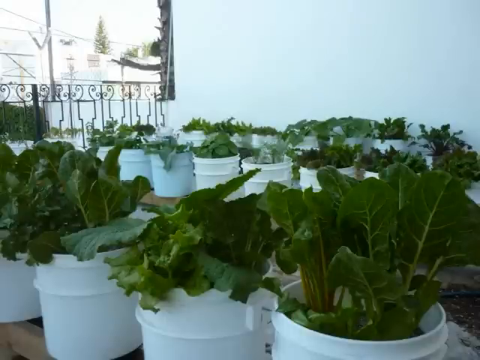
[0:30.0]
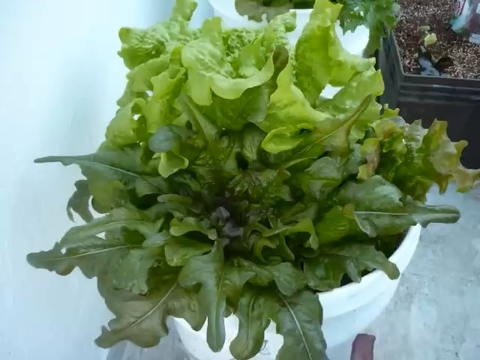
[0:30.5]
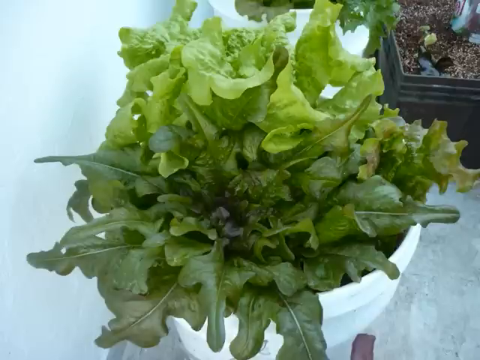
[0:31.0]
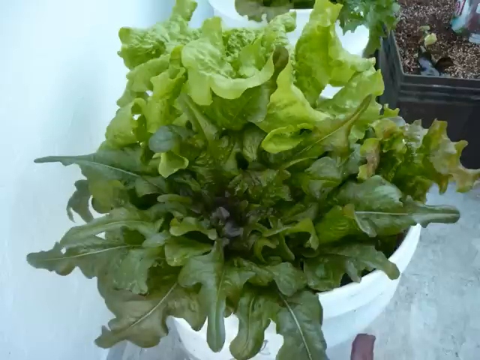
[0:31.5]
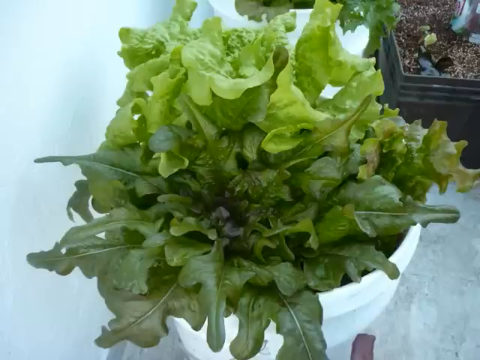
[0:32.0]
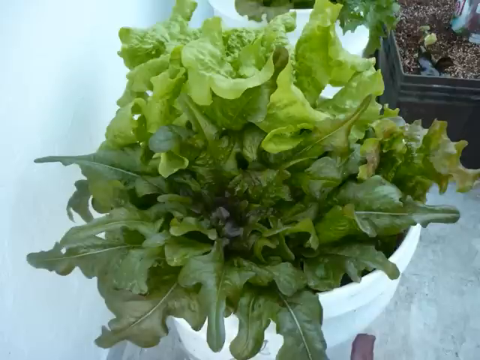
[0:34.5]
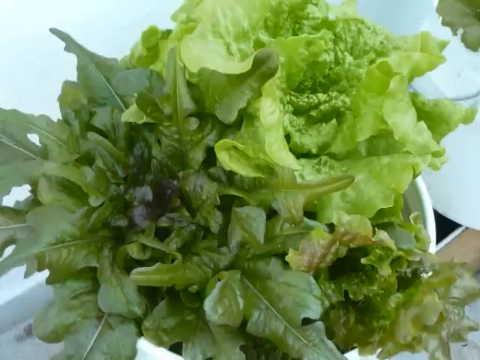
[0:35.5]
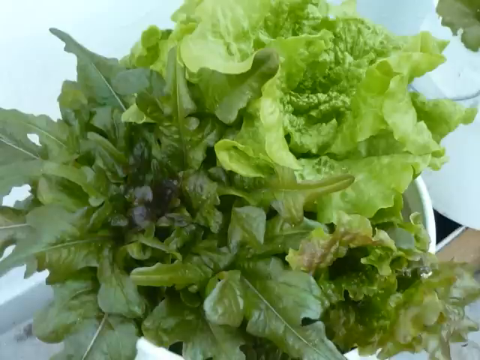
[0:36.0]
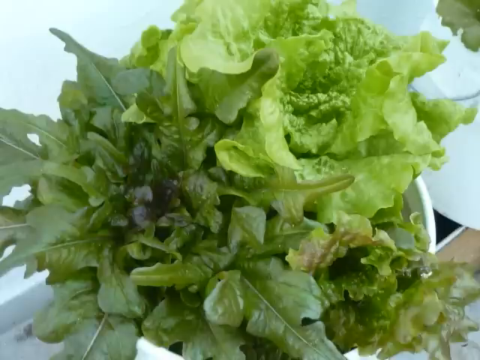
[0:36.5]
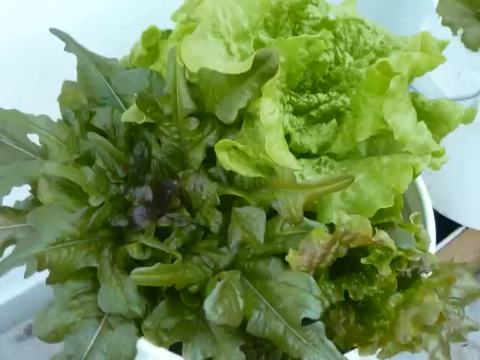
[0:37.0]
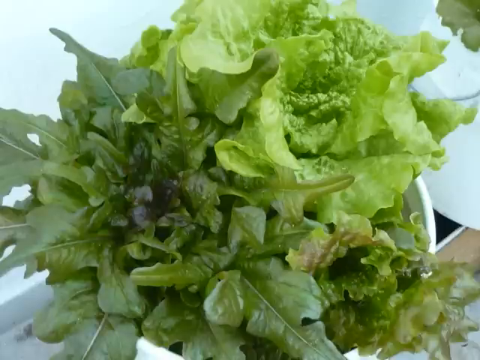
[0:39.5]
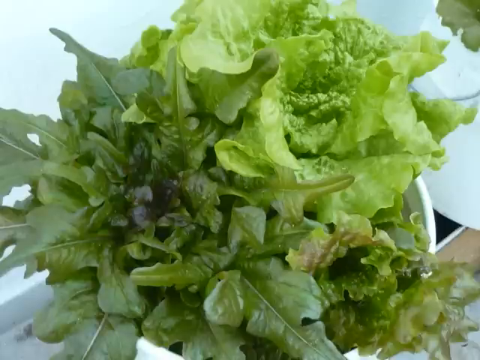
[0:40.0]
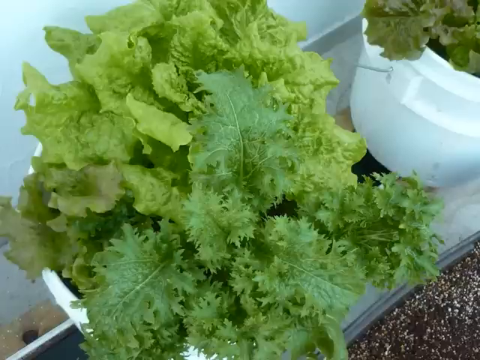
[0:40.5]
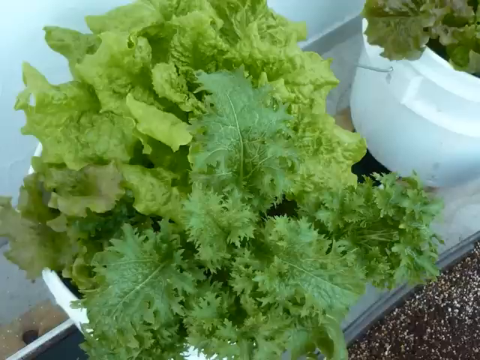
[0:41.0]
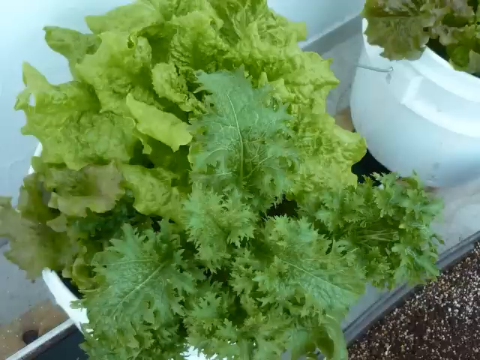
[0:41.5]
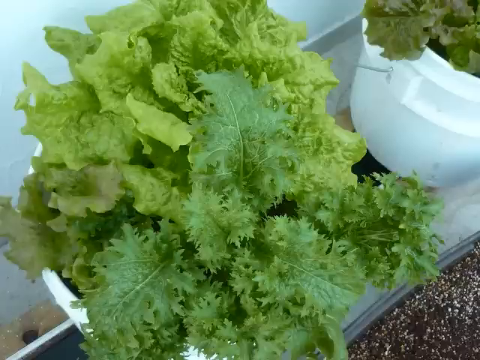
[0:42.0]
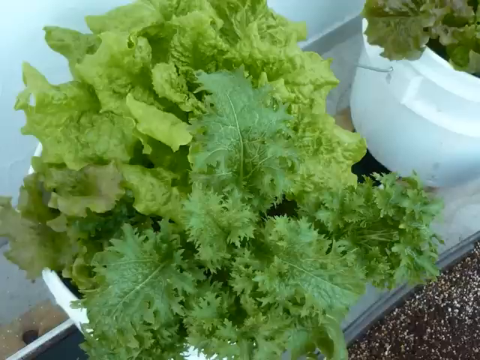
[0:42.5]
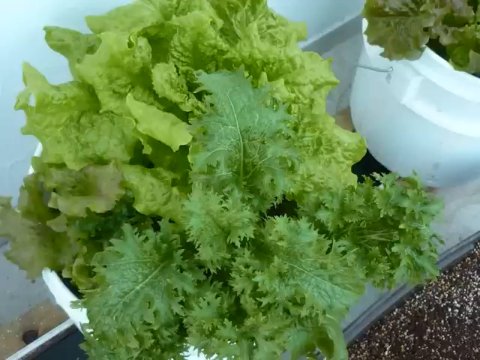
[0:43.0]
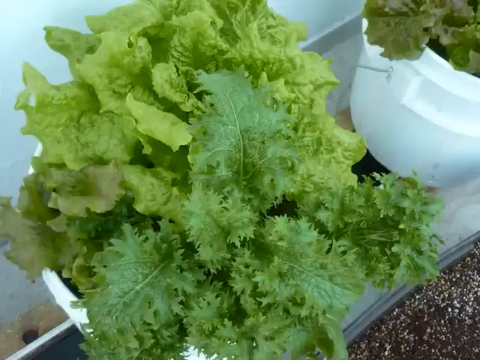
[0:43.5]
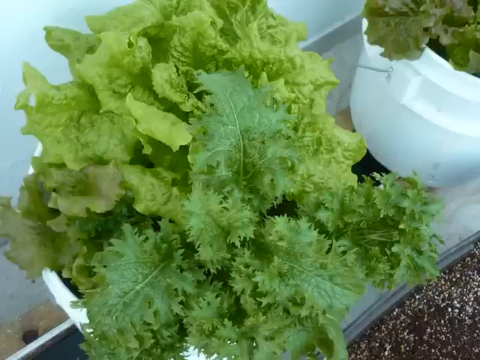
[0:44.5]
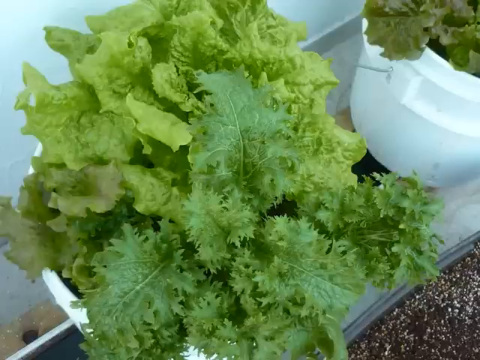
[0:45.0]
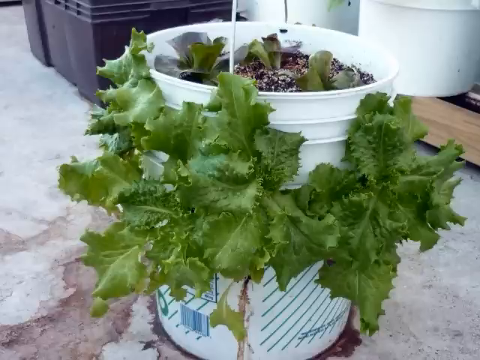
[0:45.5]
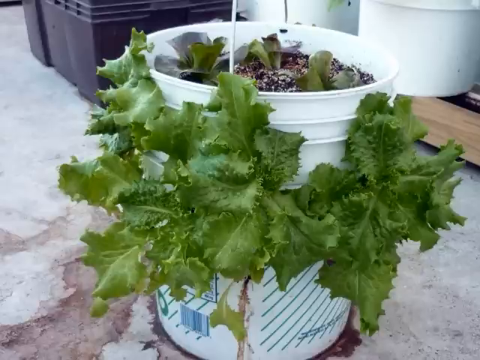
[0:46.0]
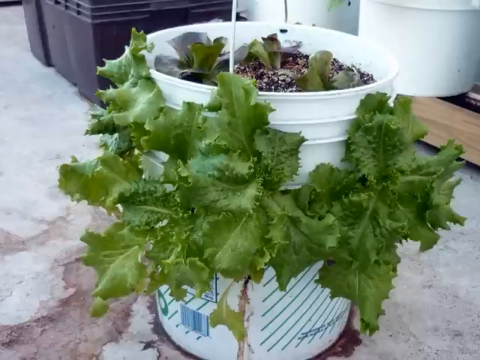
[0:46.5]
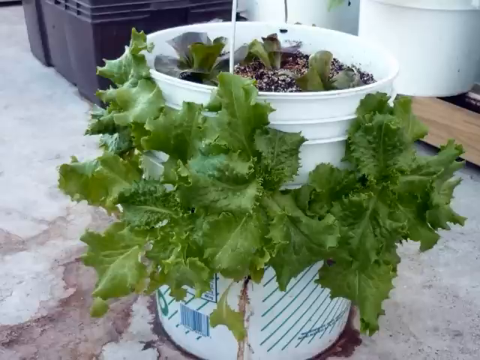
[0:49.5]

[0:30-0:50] A zoom shot shows the different kinds of vegetables grown in the white water buckets, in close-up. Kale, spinach and broccoli can be made out. Some of the vegetables have flat green surfaces, while others have green and purple coloration. The soil in the buckets is black, and some vegetables grow on top of the buckets while others have been grown on the sides of the buckets. In the last part of the shot, some black boxes or black buckets are visible in the background. All the buckets are placed in an open-air space.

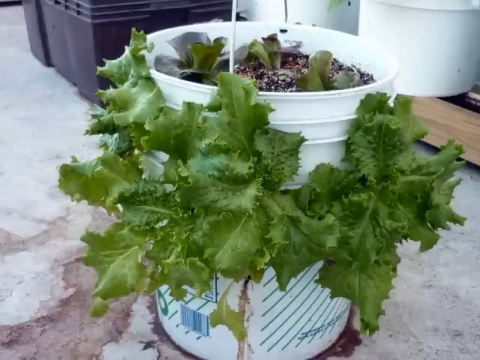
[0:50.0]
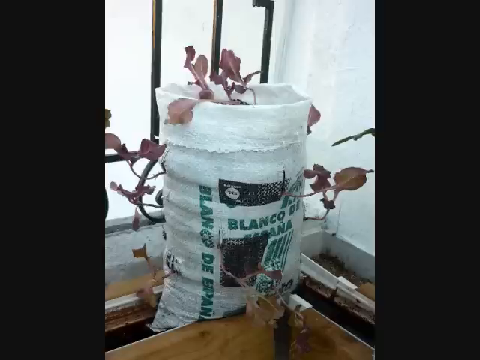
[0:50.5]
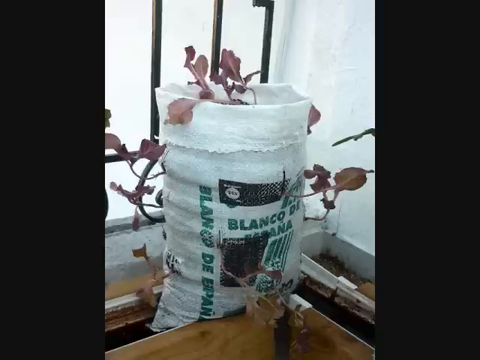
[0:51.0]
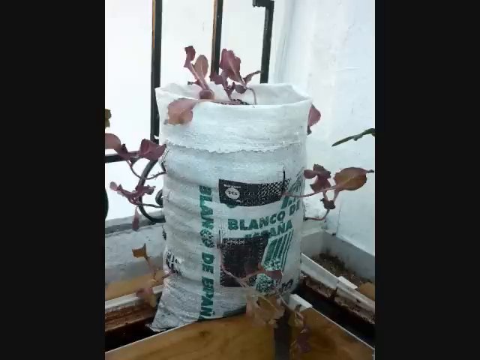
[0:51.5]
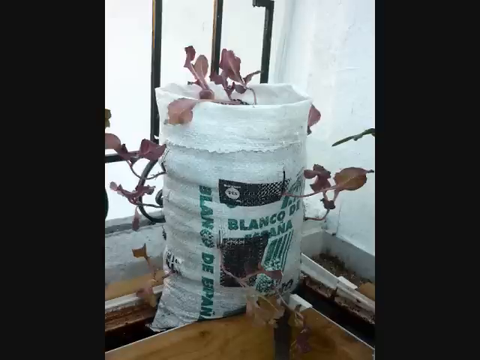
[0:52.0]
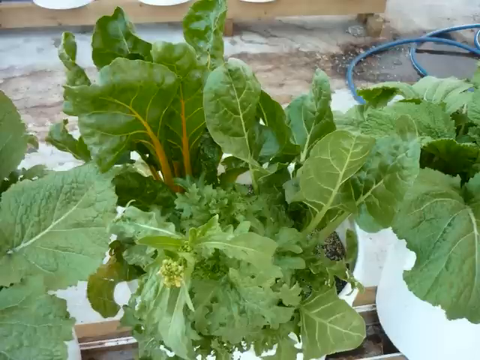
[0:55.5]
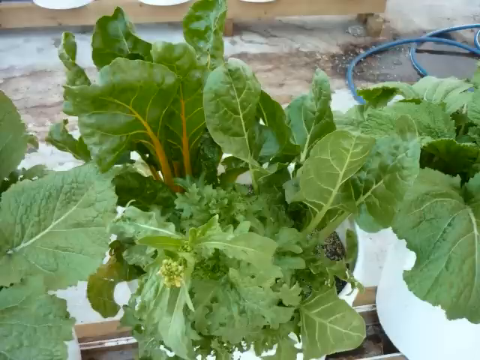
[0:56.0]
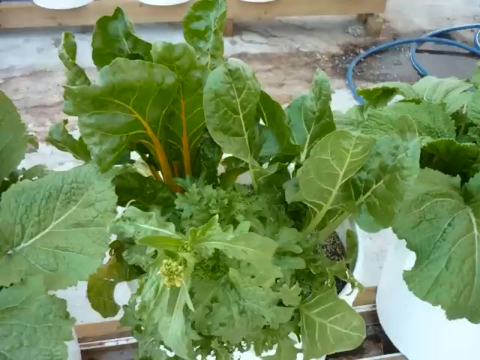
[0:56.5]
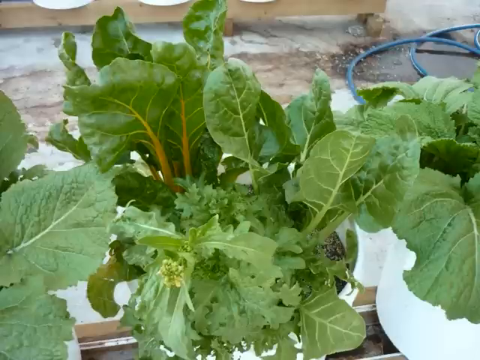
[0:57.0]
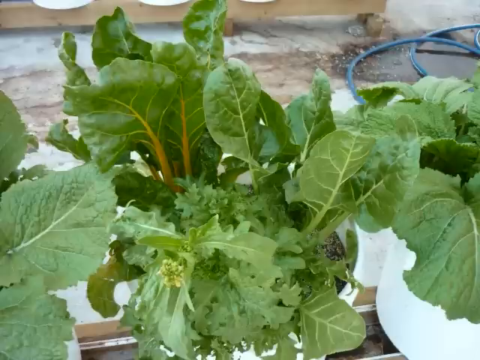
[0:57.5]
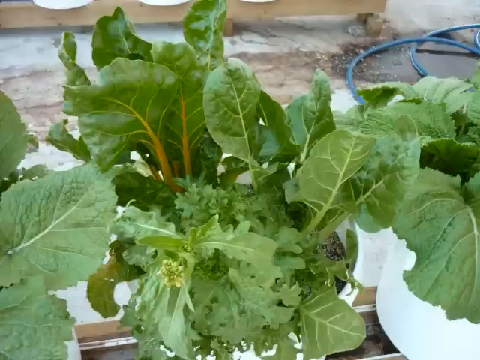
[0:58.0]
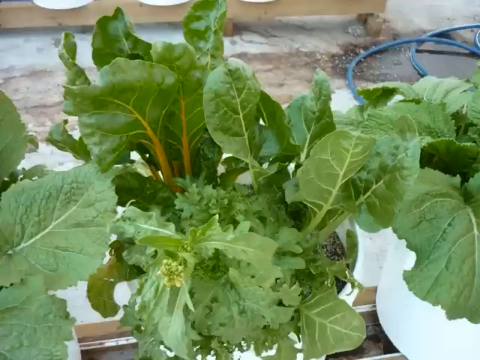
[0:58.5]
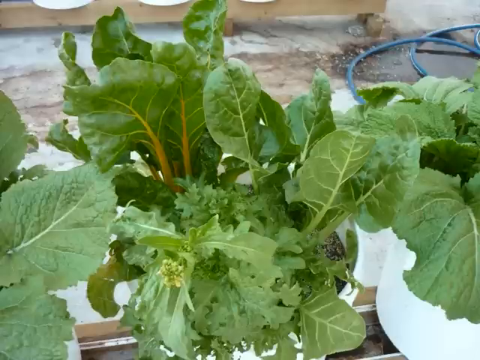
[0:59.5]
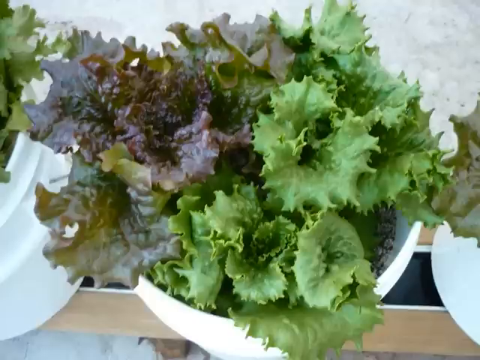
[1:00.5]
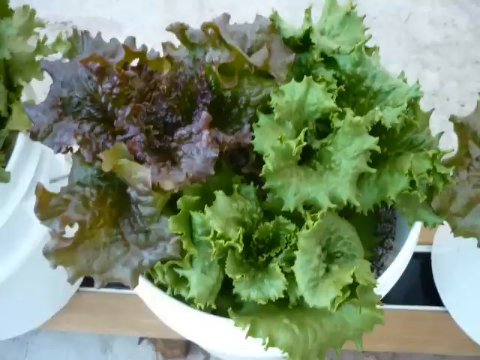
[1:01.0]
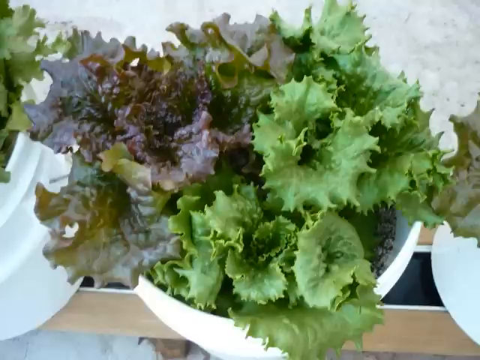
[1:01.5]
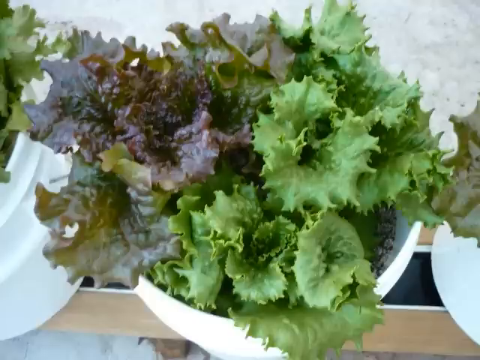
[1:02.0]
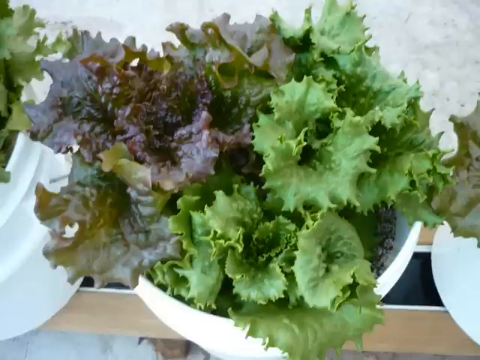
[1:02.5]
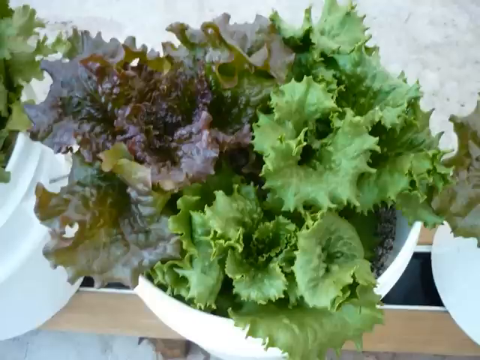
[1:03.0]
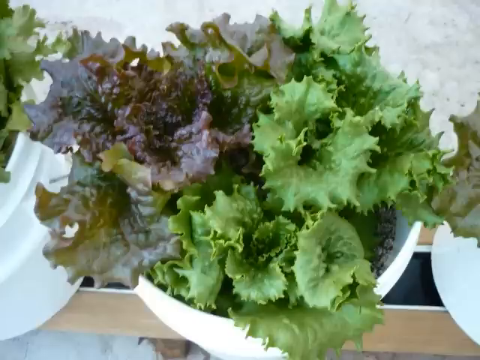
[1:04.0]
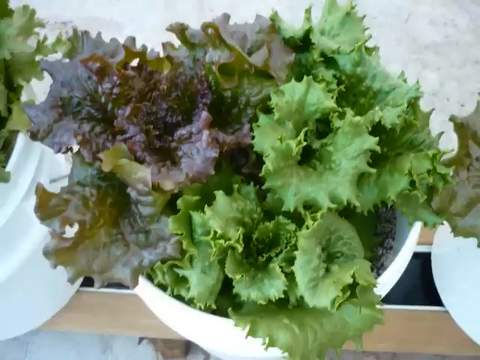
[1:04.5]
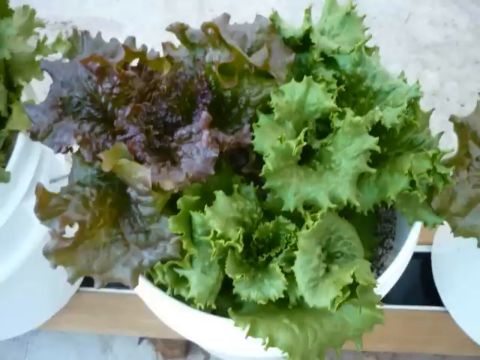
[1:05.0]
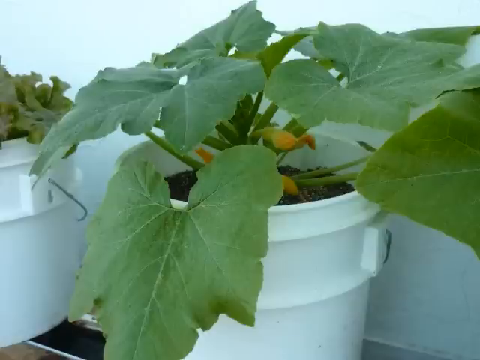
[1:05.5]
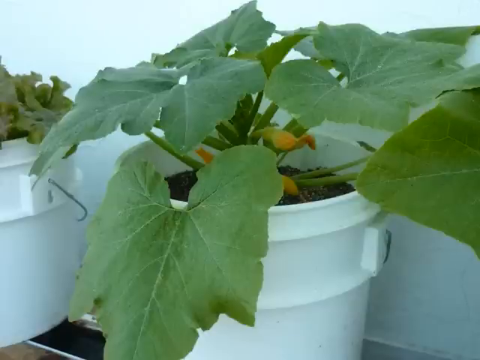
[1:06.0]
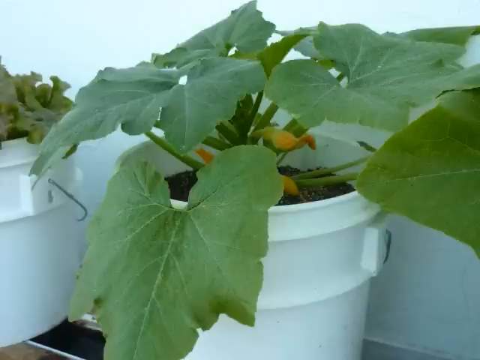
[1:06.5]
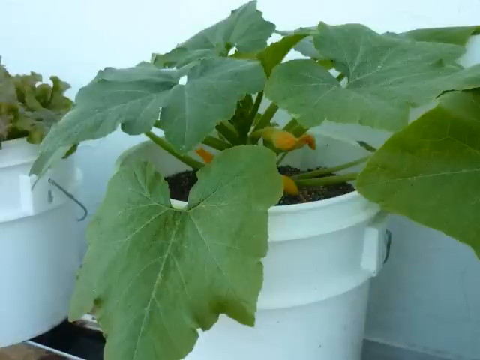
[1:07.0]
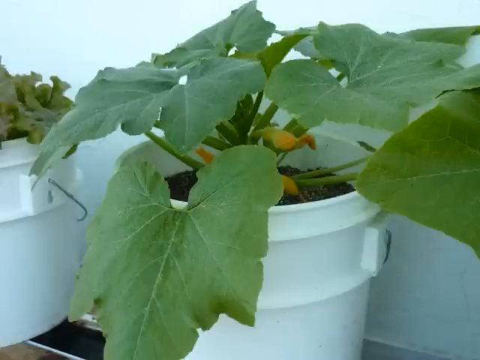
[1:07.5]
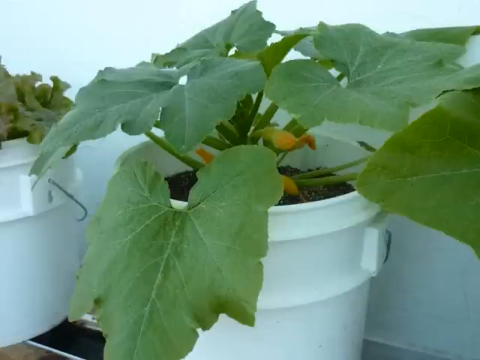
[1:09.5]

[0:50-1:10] A bucket with vegetables grown on its sides is shown; holes appear to have been made in the sides of the buckets for the vegetables. Some vegetables are also grown in a white sack with "Blanco" written on it. Holes have been made in the sack, which is filled with soil, and a few vegetables pop out of each hole. The sack seems to be placed in a separate corner, with metal grills visible in the background. The shot pans back to the vegetables in the white sacks, with a close-up of the kale, and a blue hose used for irrigation is visible in the background. As the shot continues, the vegetables with purple leaves are seen growing in the white buckets. Finally, a pumpkin plant growing in one of the white buckets is shown; it has just started blooming flowers.